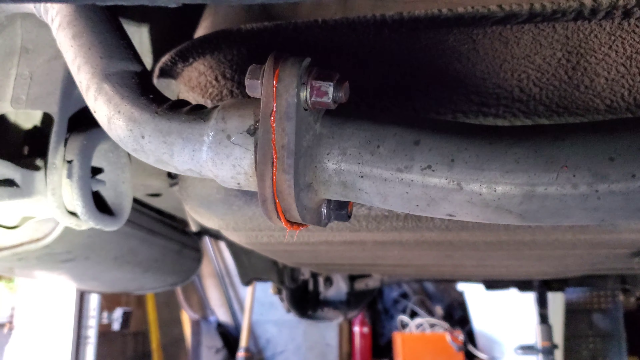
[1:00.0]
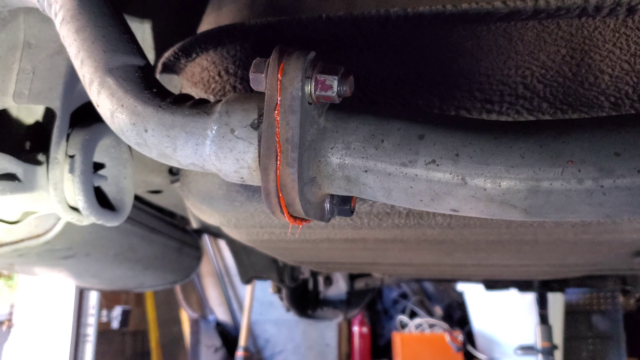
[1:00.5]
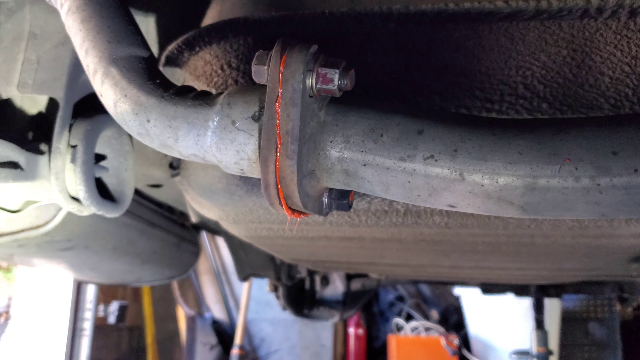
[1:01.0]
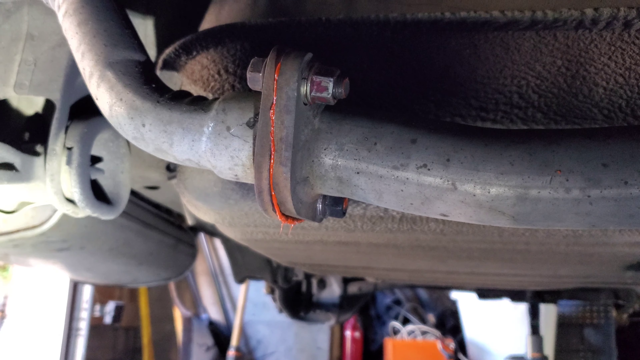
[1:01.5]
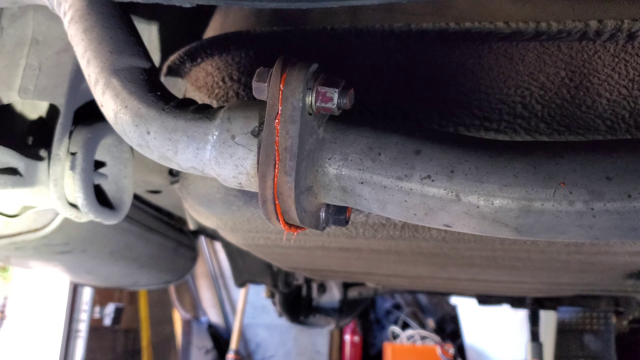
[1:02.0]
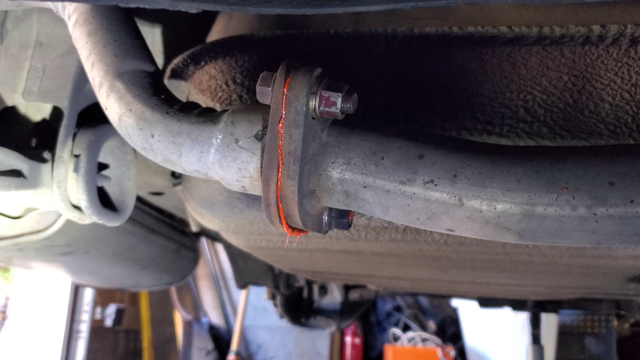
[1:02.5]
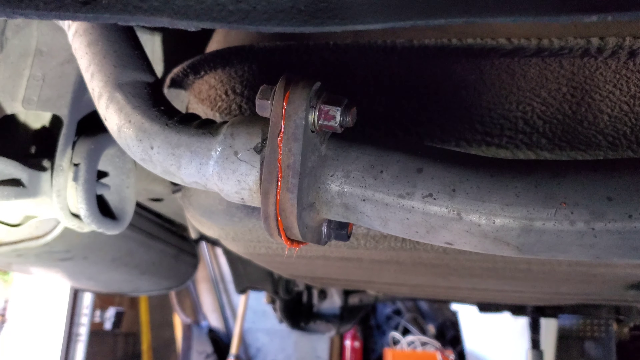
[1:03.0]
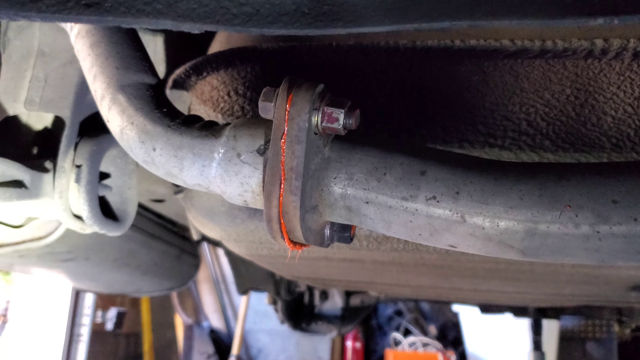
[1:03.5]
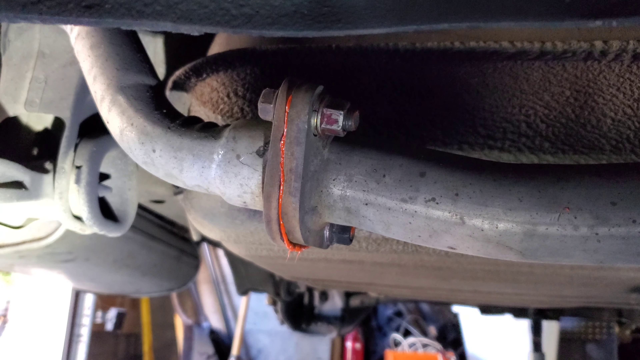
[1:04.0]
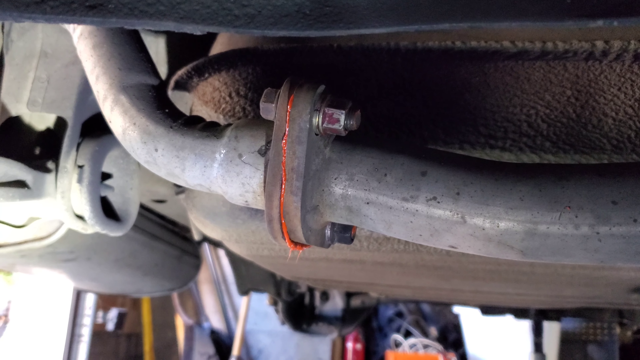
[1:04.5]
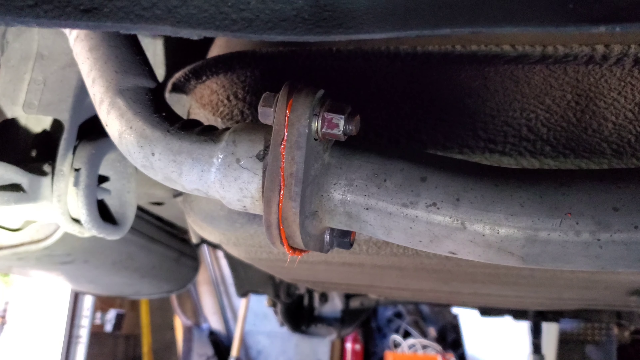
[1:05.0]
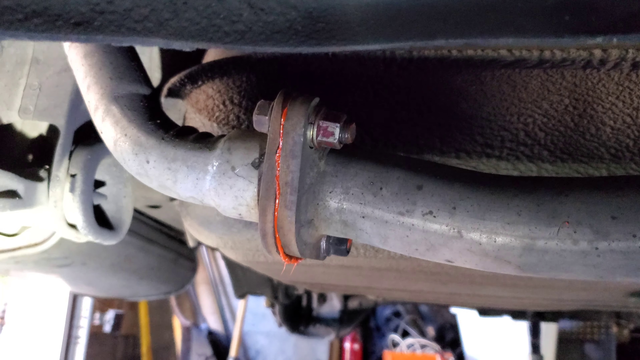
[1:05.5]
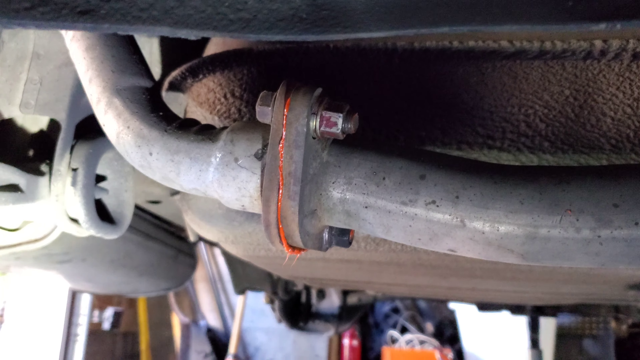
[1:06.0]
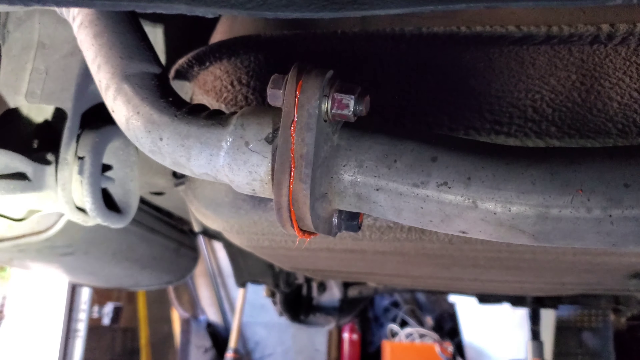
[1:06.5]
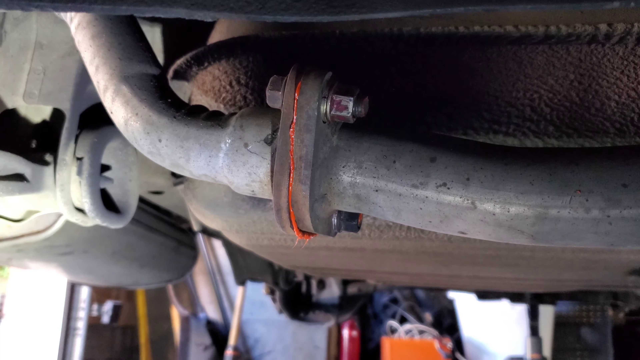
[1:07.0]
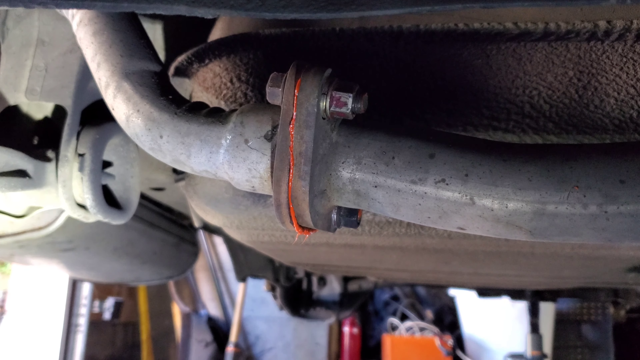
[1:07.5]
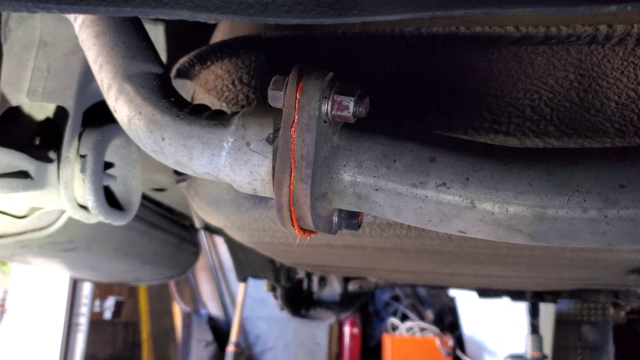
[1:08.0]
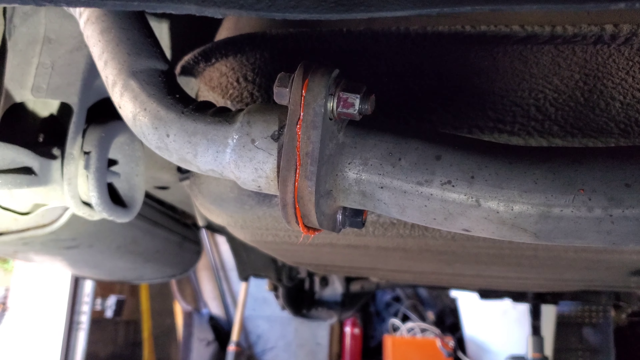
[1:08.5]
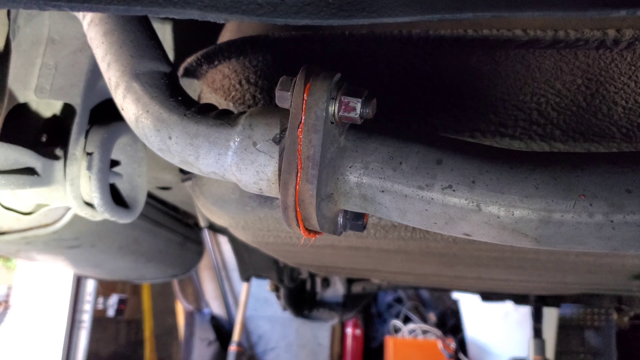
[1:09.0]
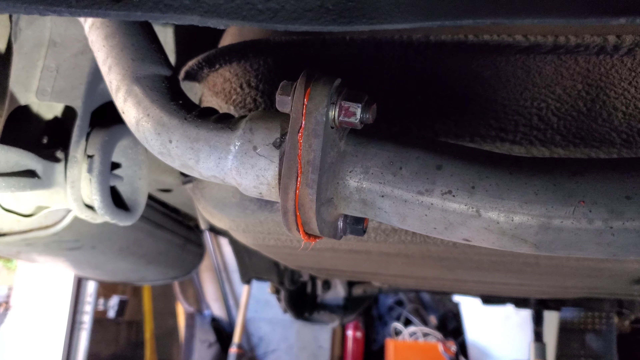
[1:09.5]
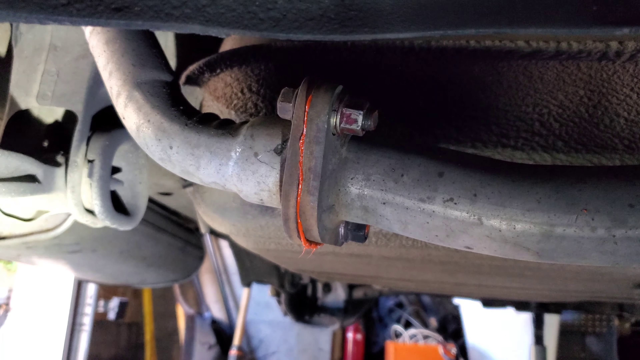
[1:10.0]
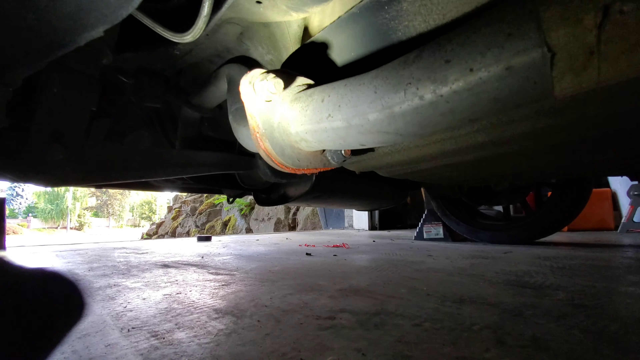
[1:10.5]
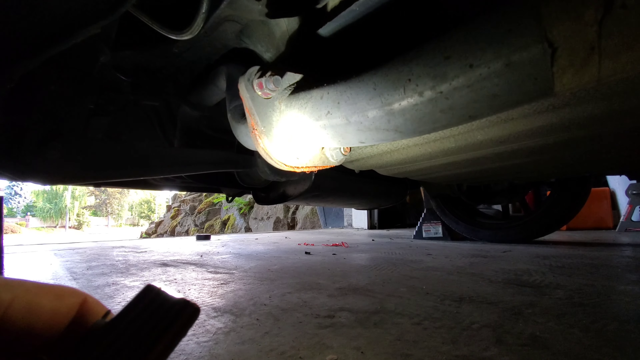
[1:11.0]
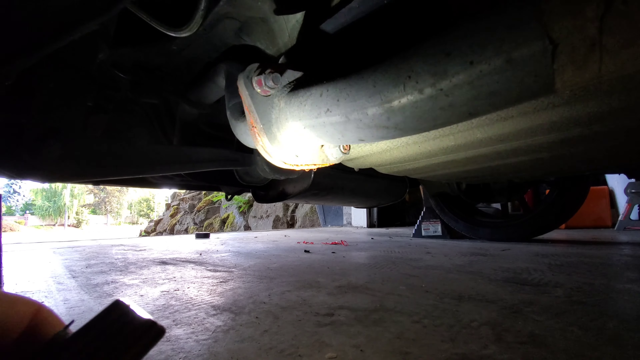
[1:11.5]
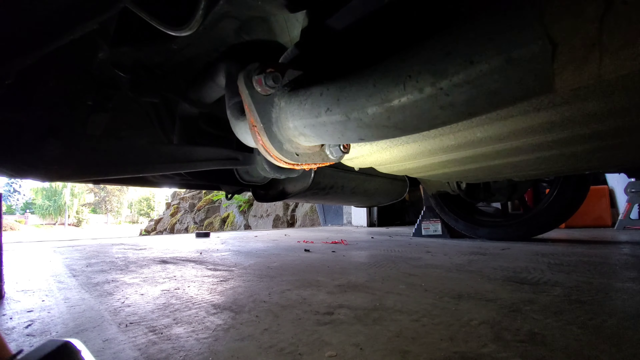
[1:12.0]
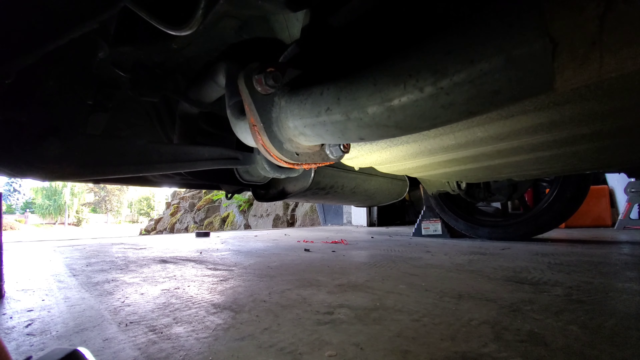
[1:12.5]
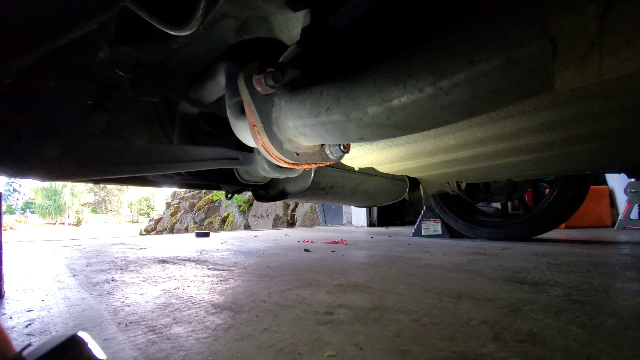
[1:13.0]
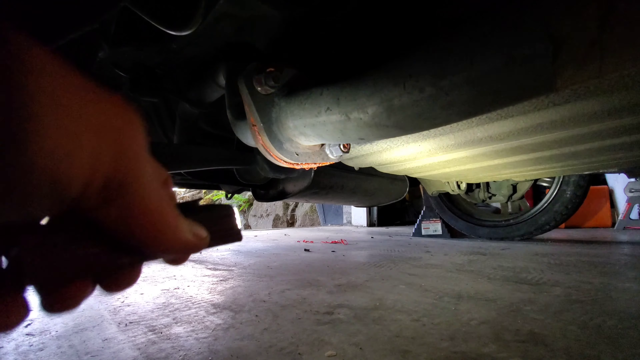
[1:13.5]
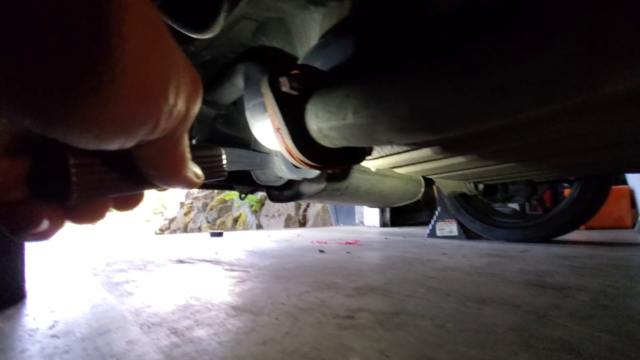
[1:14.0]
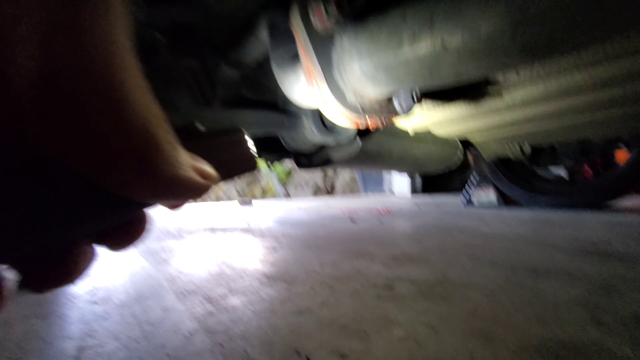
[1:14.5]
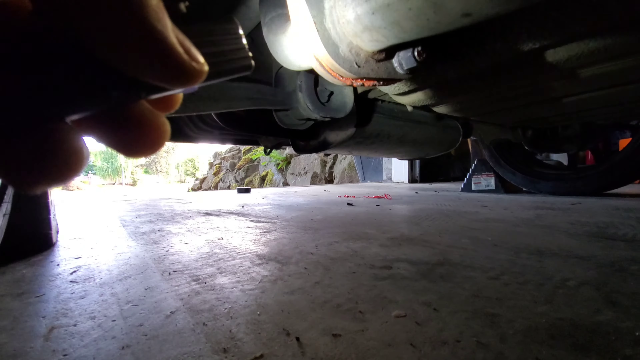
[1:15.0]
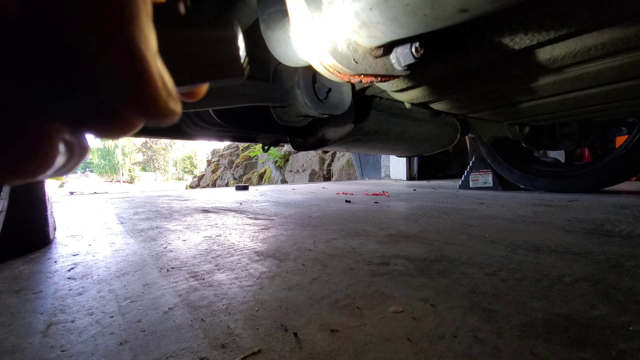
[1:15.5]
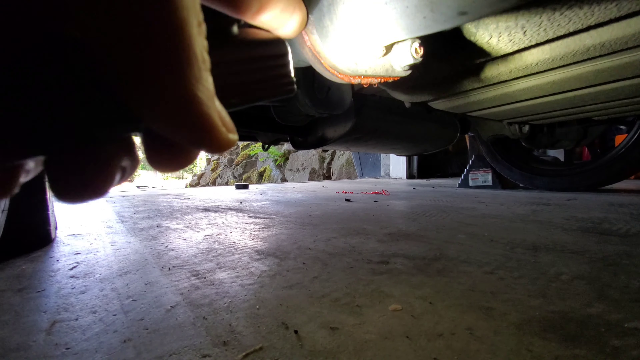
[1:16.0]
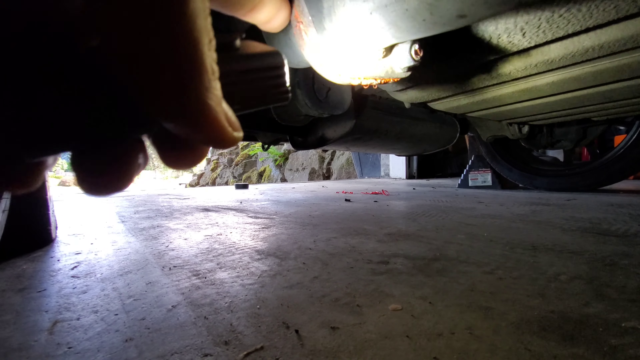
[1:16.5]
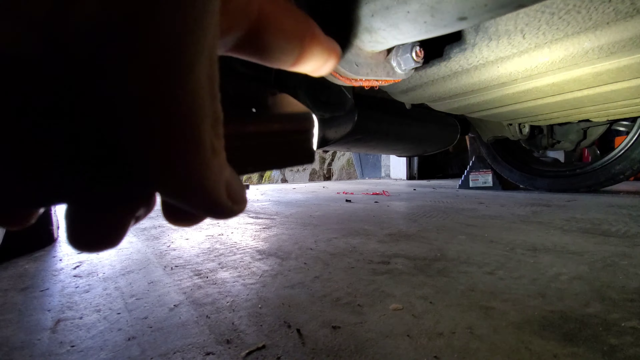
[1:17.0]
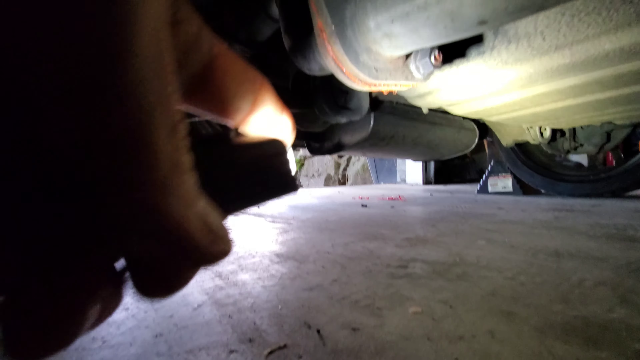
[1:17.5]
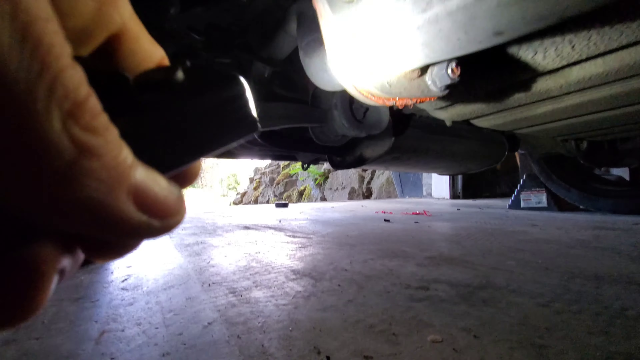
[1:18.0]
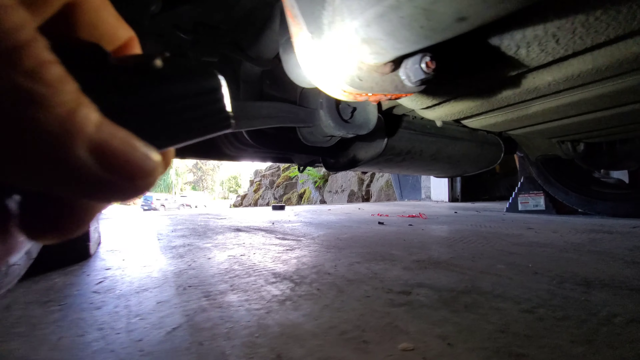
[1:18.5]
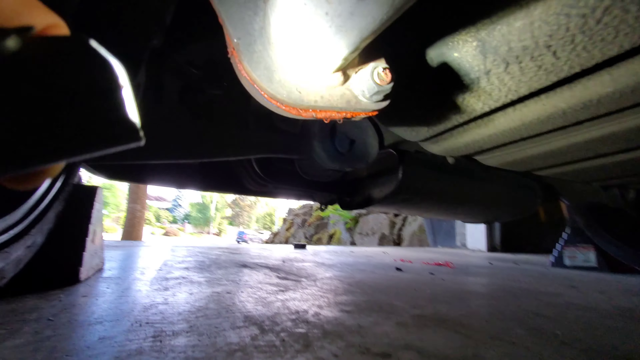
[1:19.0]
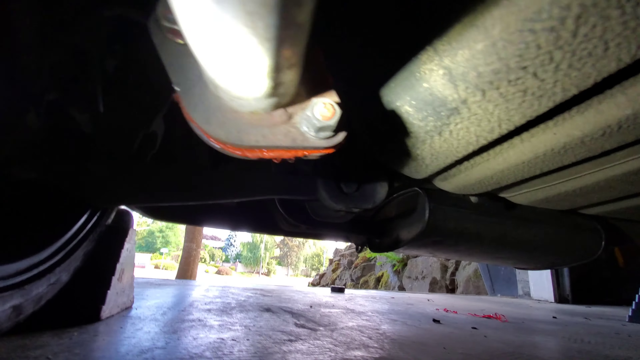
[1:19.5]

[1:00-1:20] A long piece of metal tubing seems to be on the underside of a vehicle. The tubing has been connected using two large bolts, and thick orange liquid can be seen oozing out of the joint between the two sections, used to help join the two pieces of tube together. Another view from underneath the vehicle shows a tyre on the right-hand side. On the left-hand side of the screen, someone's hand holds a torch that illuminates a piece of the underside of the car. It looks like the same joint, bolted and glued together using the orange liquid. The torch takes a closer look all around the joint, looking from the front and then turning to look at the back.